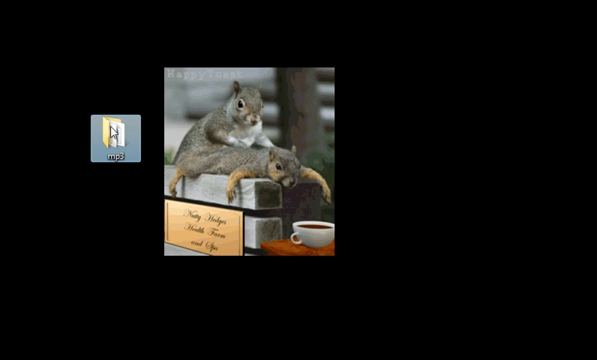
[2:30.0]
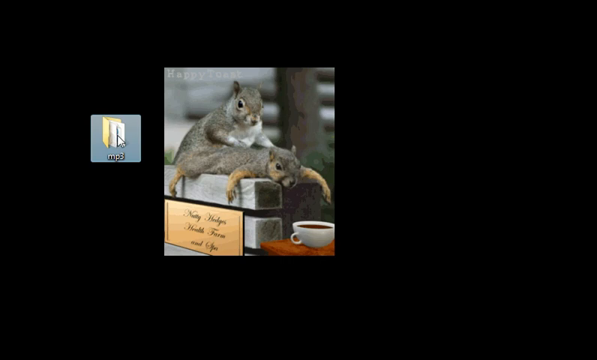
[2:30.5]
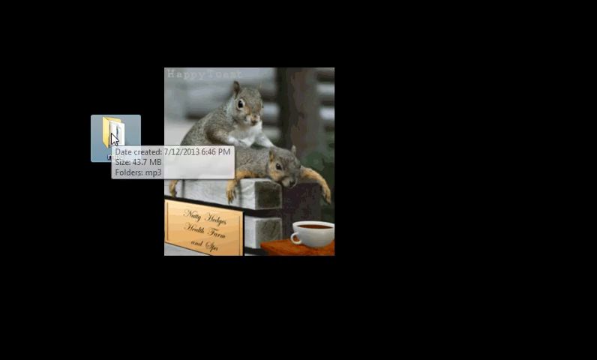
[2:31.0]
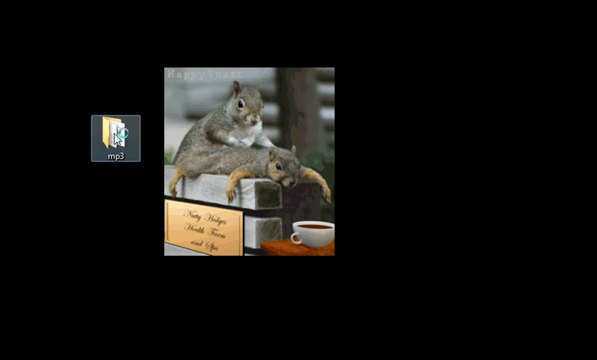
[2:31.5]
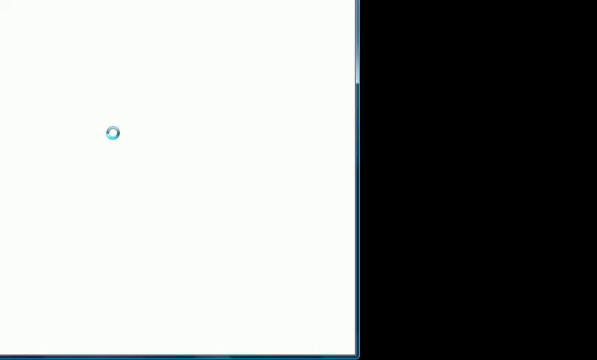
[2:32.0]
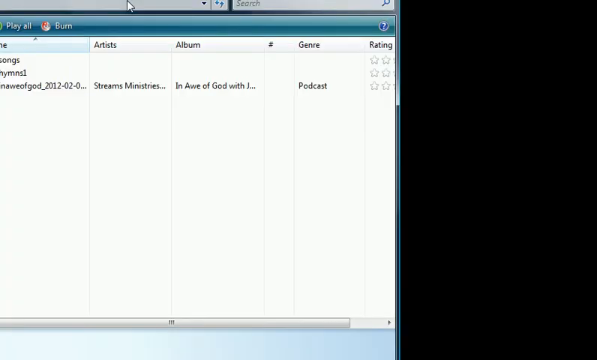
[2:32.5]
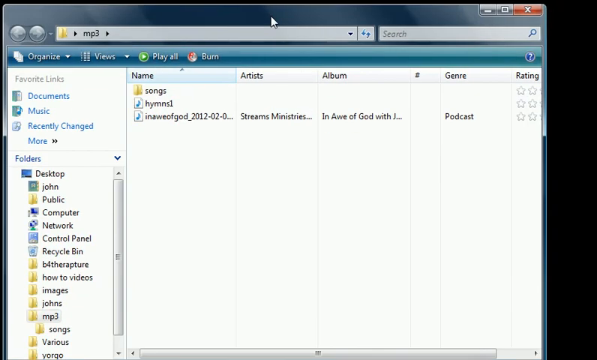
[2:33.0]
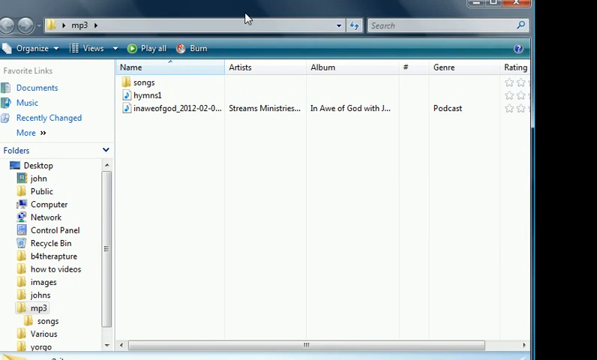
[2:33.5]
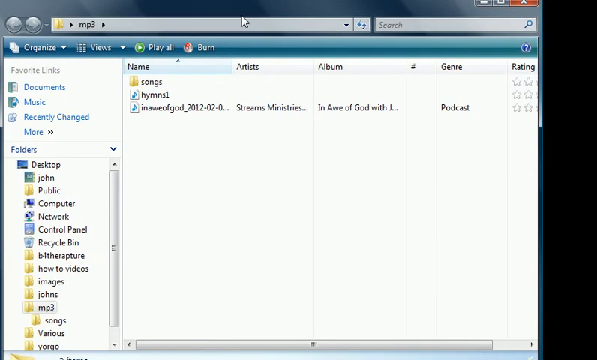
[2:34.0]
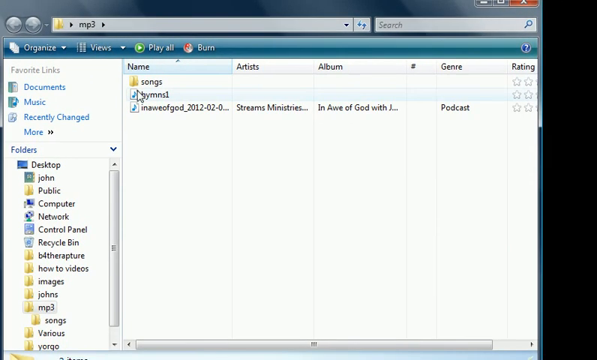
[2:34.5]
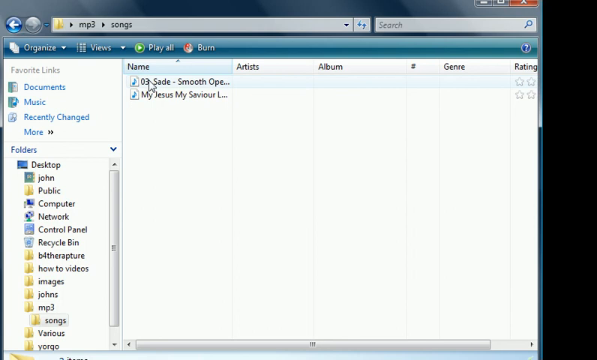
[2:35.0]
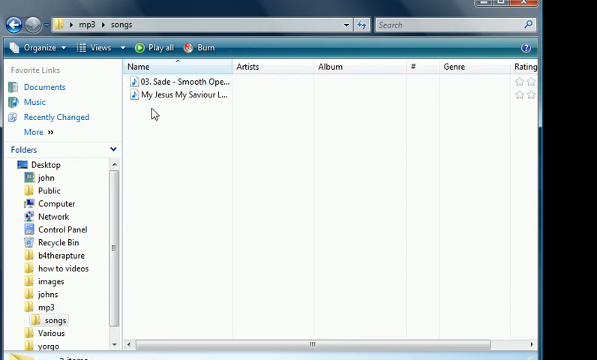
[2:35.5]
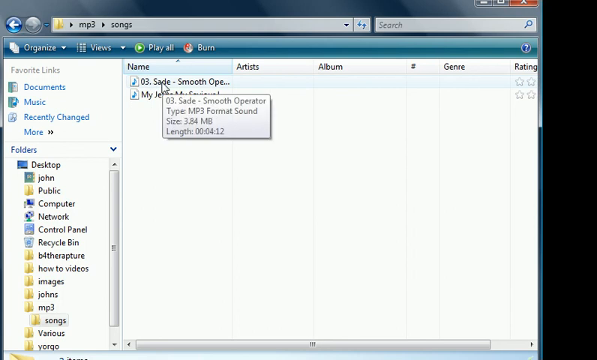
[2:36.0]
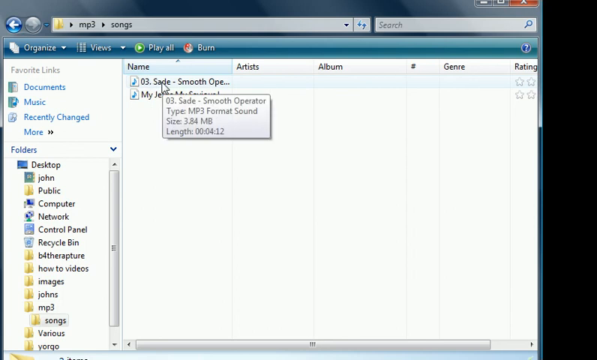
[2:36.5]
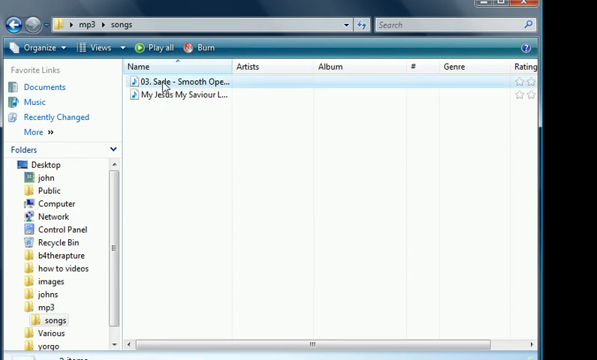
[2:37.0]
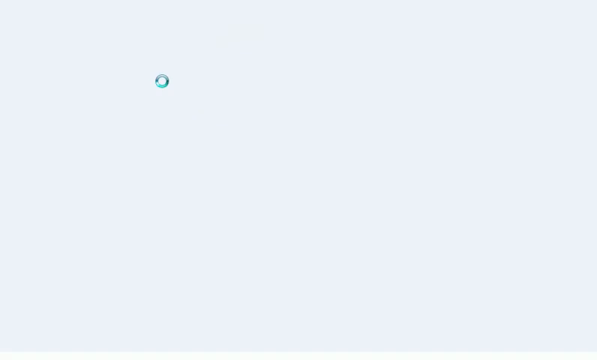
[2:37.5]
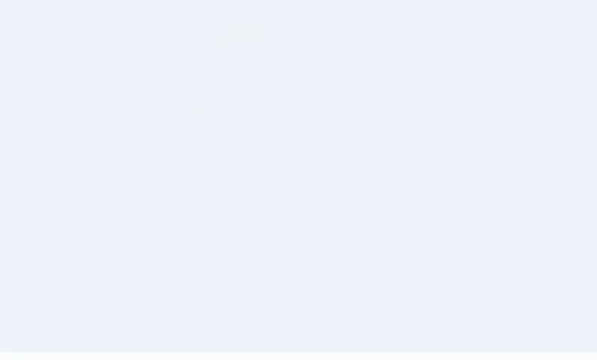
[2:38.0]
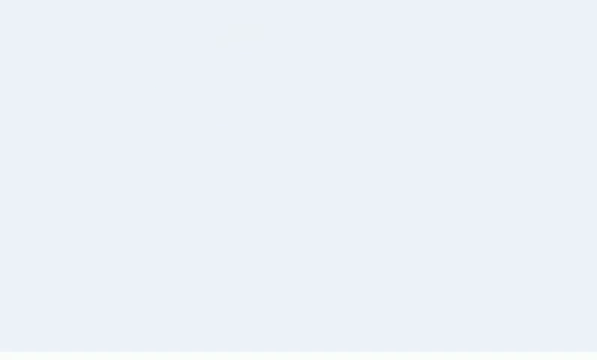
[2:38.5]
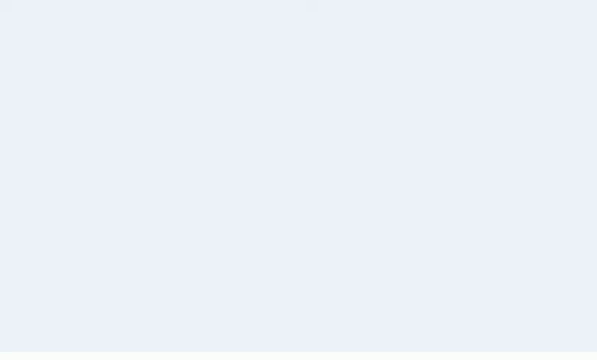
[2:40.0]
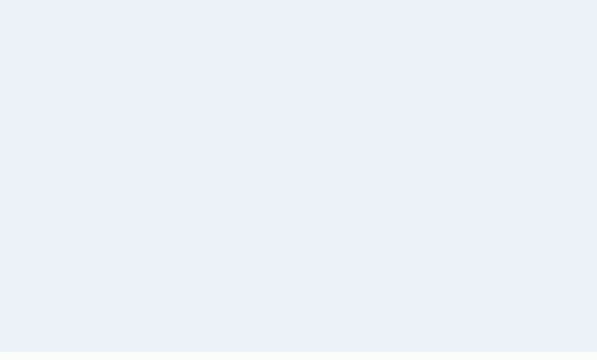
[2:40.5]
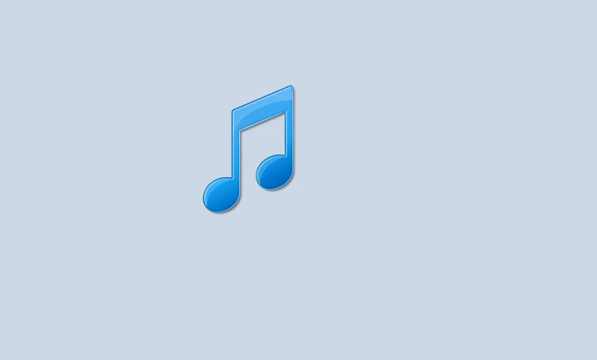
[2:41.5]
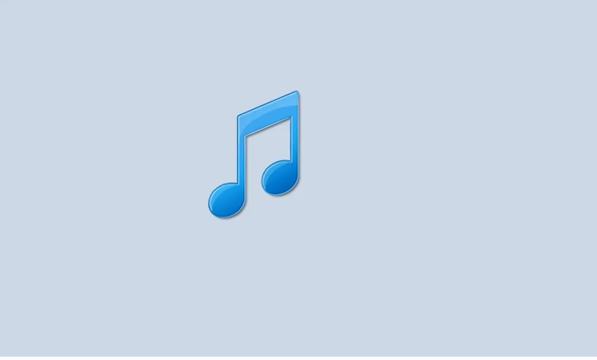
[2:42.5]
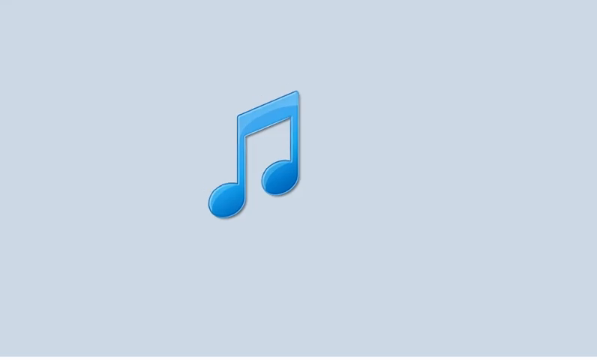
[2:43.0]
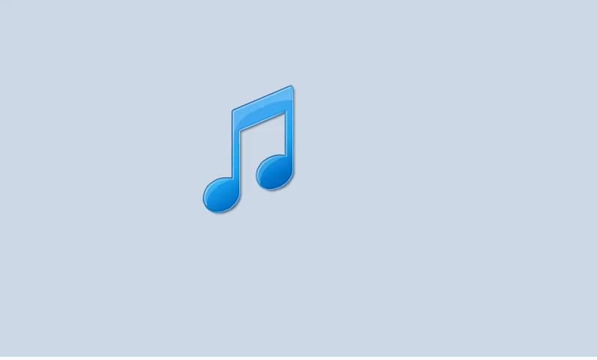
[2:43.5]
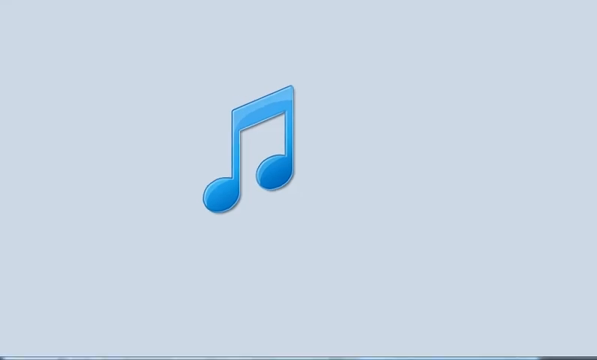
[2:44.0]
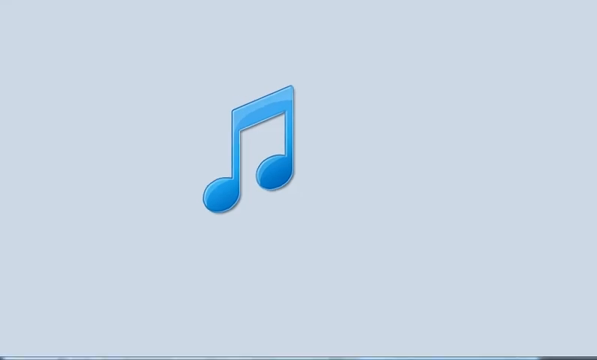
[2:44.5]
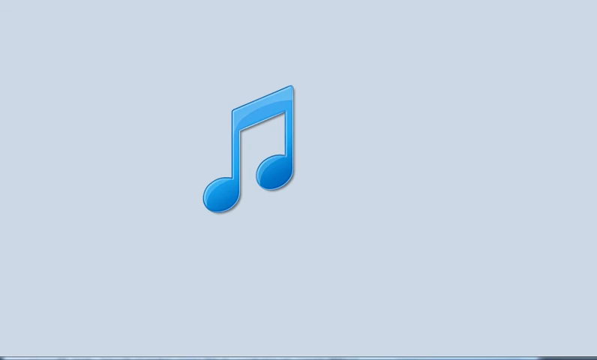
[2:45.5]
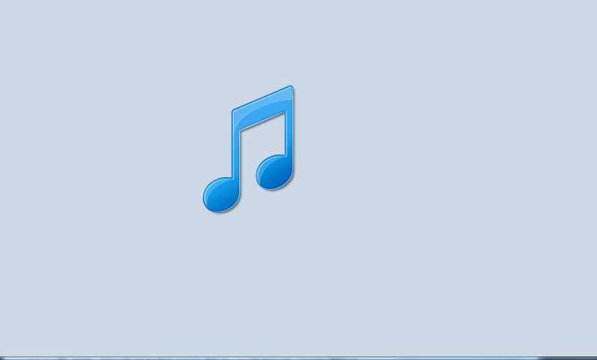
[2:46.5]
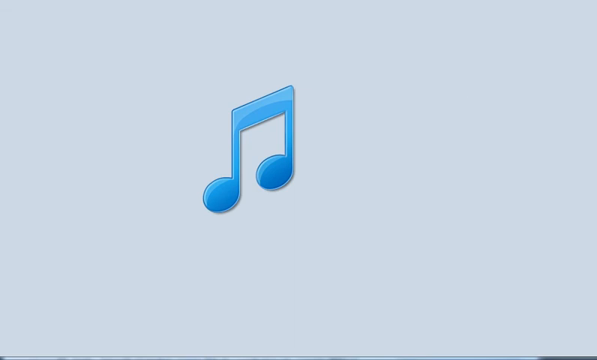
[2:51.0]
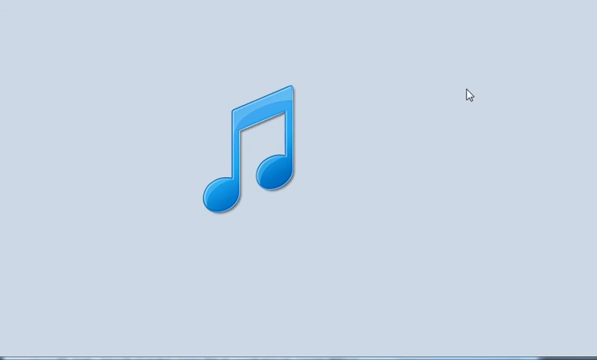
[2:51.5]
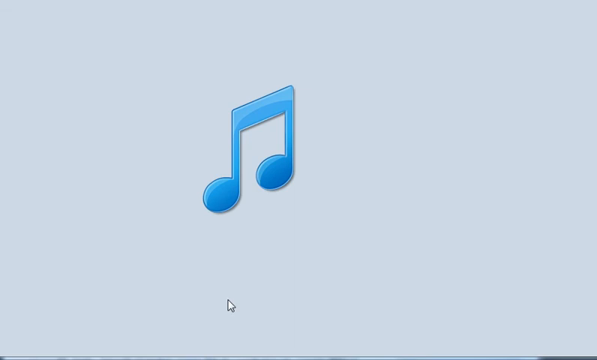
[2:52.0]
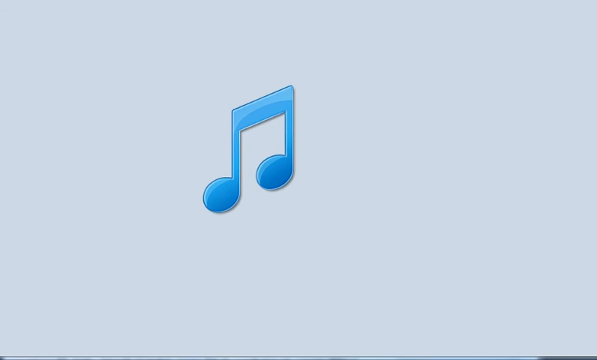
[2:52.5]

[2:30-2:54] The desktop background is black with a photo of two squirrels, one on top of the other. The bottom squirrel is lying on its stomach with its front paws out, and there is a coffee cup in front of the squirrels. At the top left of the photo is the text "Happy Toast." To the left of the photo is a desktop folder called MP3, which the white mouse cursor double-clicks. The animated blue waiting symbol appears briefly, and a folder dialog opens. Another folder is clicked, showing two MP3 files. The top one is the downloaded file, 03. Sade - Smooth Operator, which is double-clicked. The waiting symbol appears briefly again. The screen goes bluish-white in the background, then black, then bluish-white again, and a blue music note icon appears in the center of the screen, moving up and down. The white cursor appears again and moves from approximately the center of the screen to the bottom left.